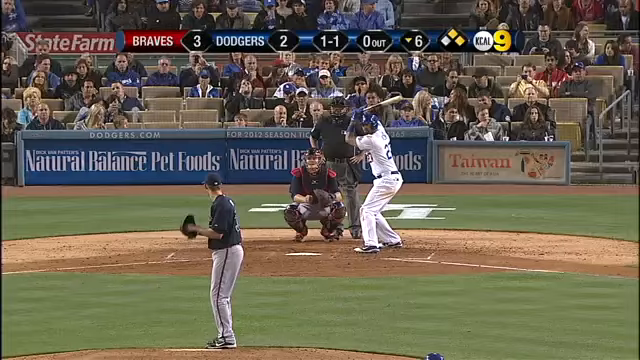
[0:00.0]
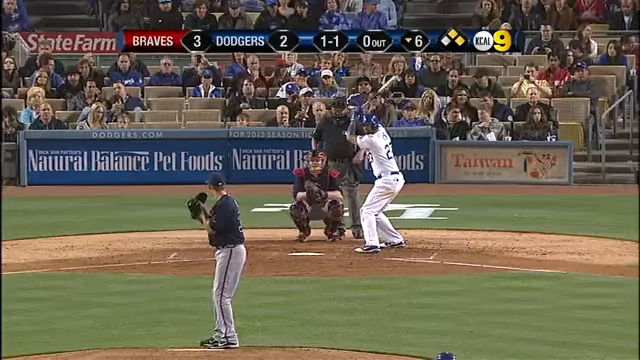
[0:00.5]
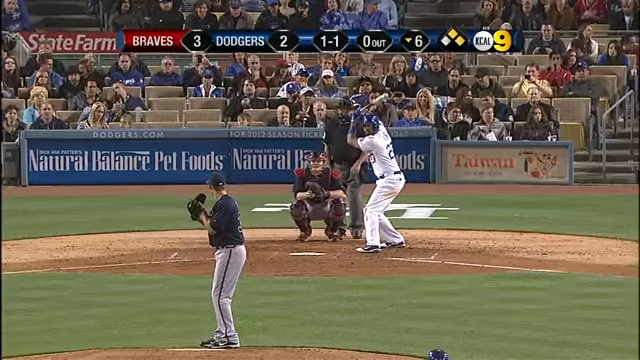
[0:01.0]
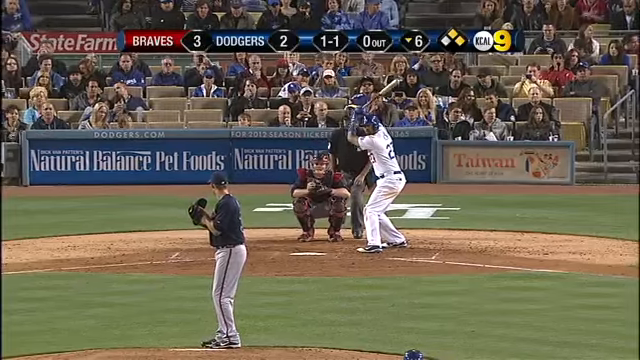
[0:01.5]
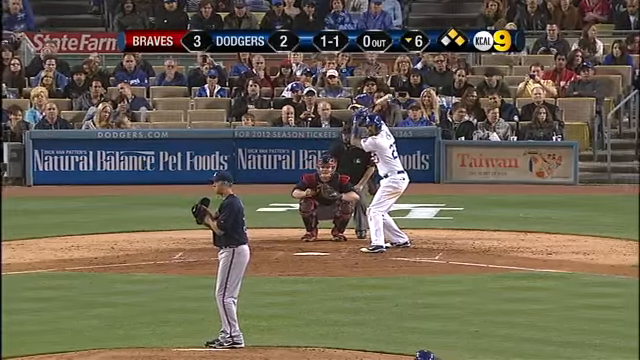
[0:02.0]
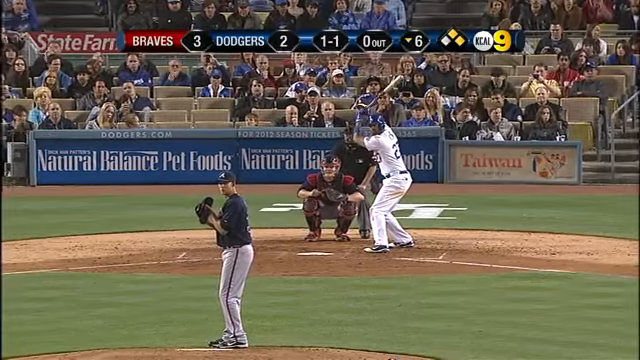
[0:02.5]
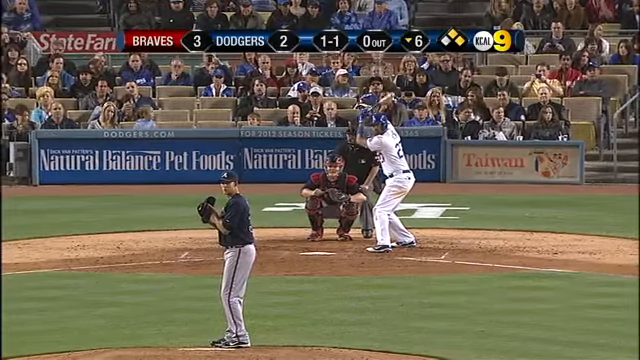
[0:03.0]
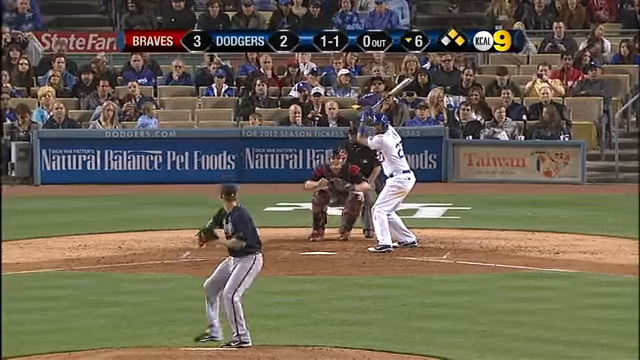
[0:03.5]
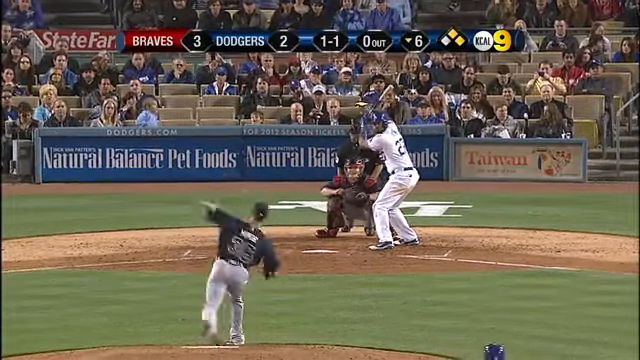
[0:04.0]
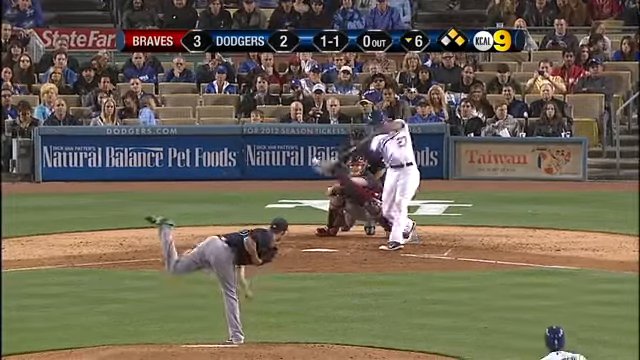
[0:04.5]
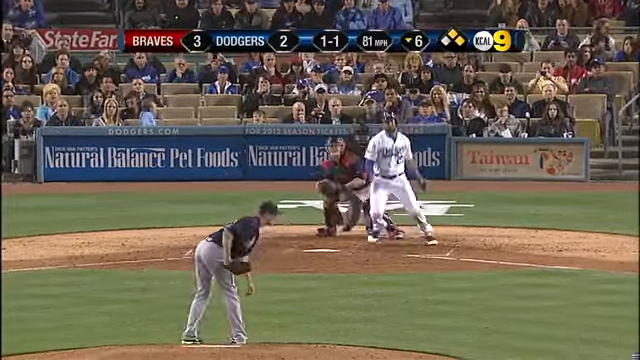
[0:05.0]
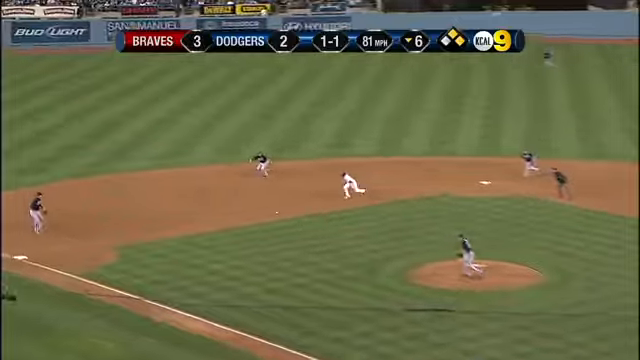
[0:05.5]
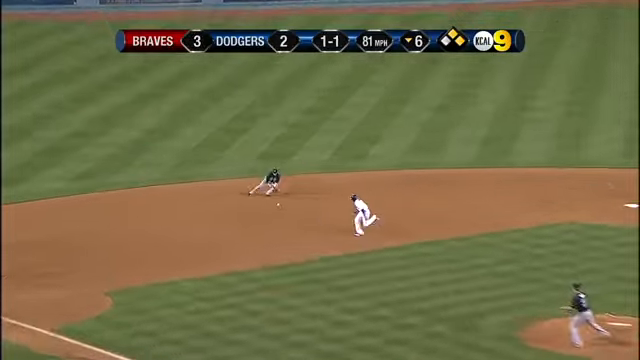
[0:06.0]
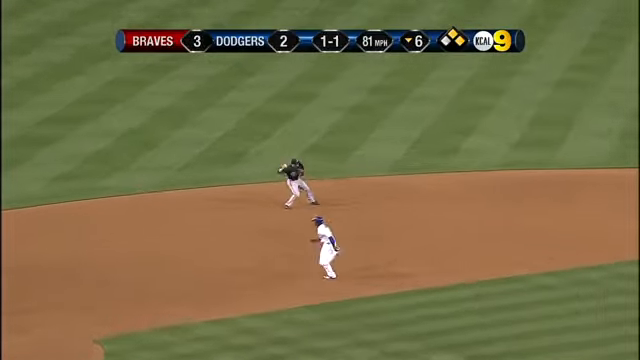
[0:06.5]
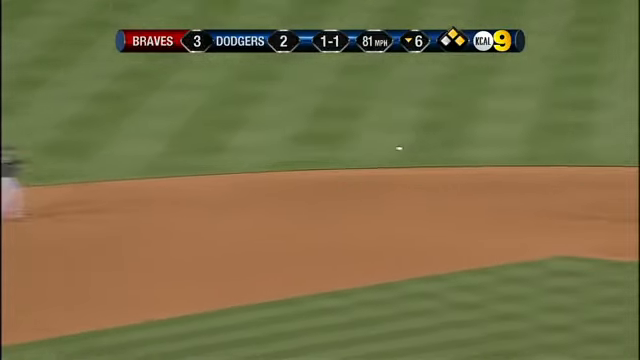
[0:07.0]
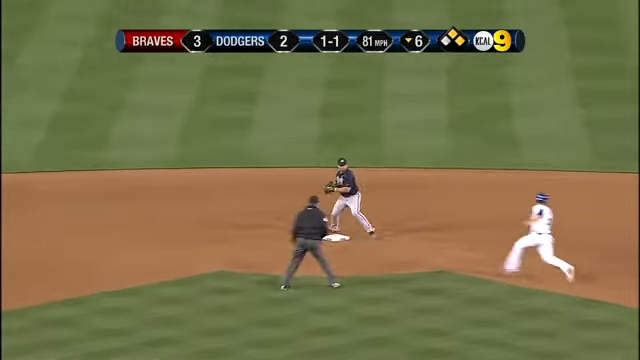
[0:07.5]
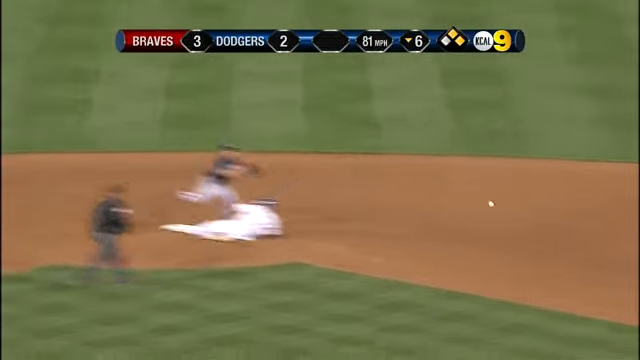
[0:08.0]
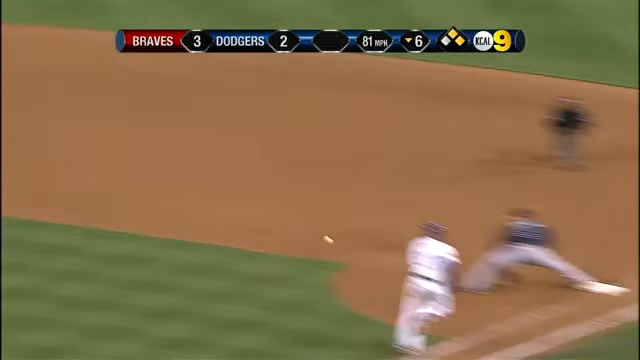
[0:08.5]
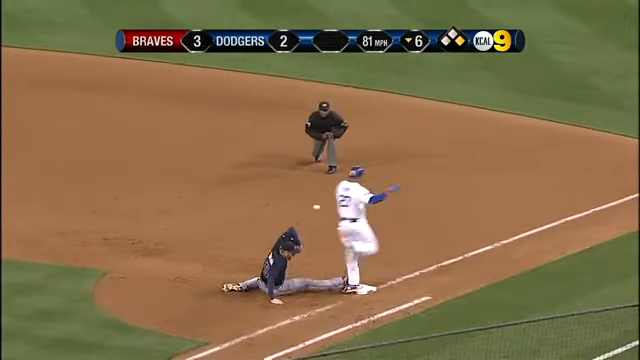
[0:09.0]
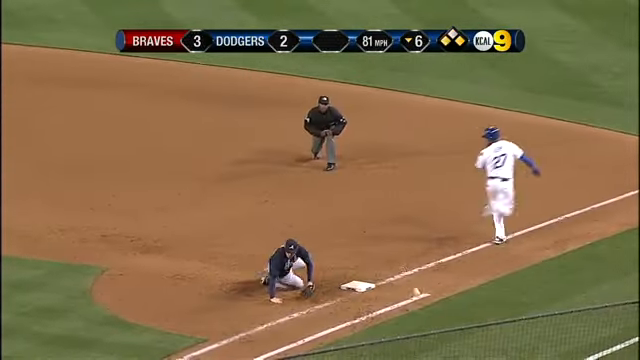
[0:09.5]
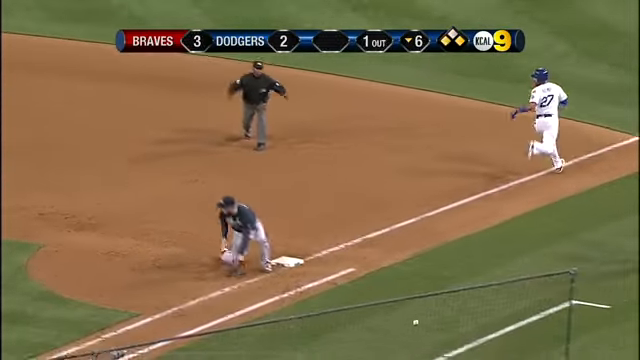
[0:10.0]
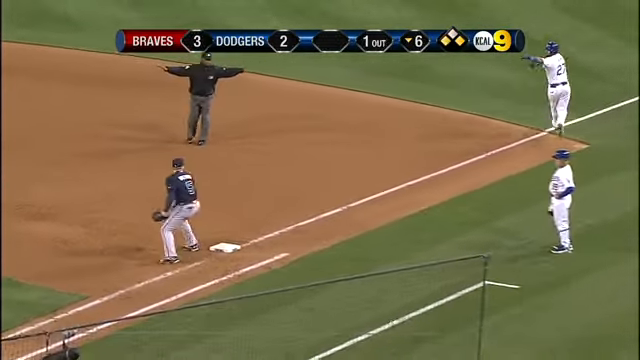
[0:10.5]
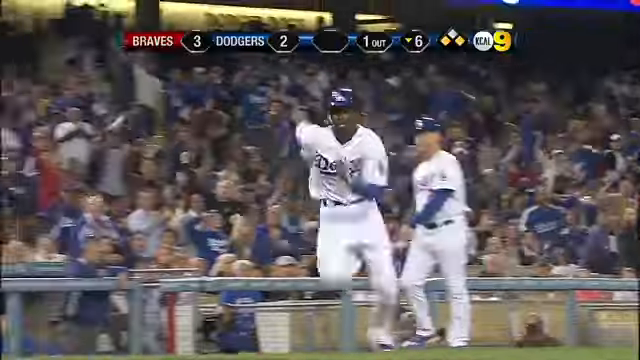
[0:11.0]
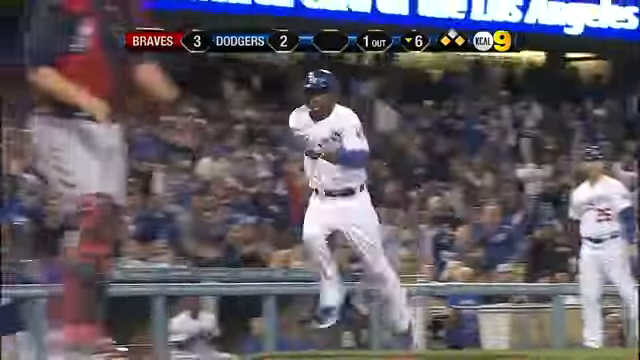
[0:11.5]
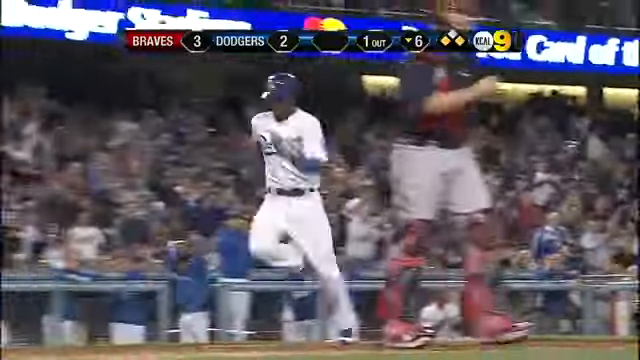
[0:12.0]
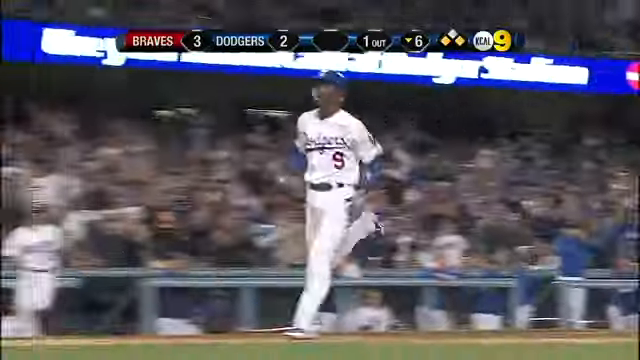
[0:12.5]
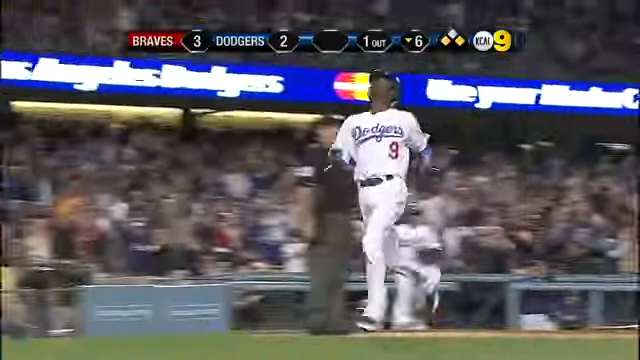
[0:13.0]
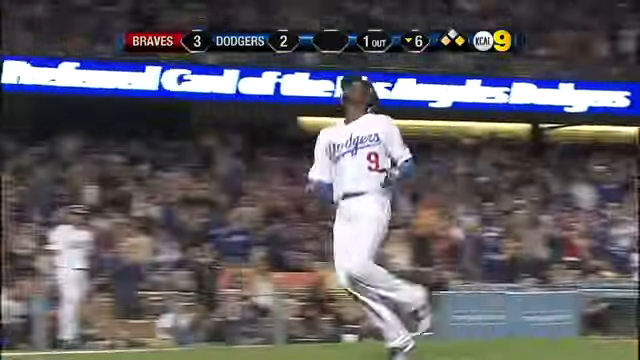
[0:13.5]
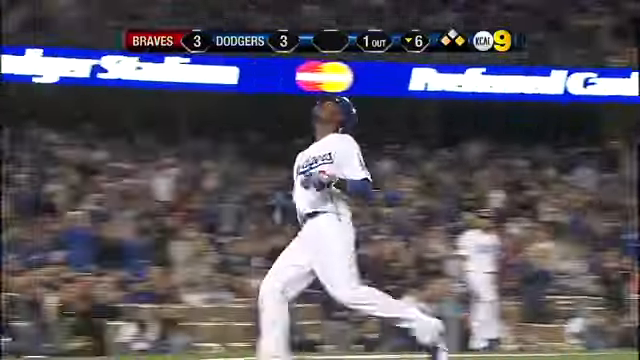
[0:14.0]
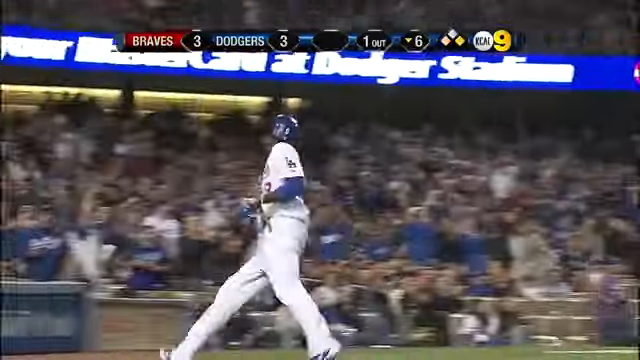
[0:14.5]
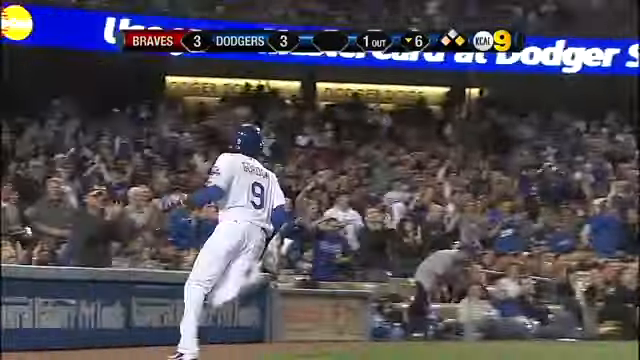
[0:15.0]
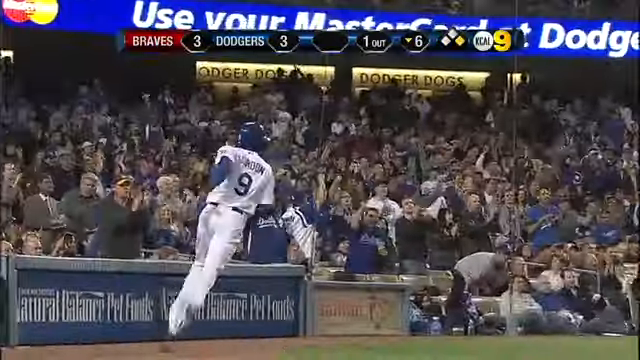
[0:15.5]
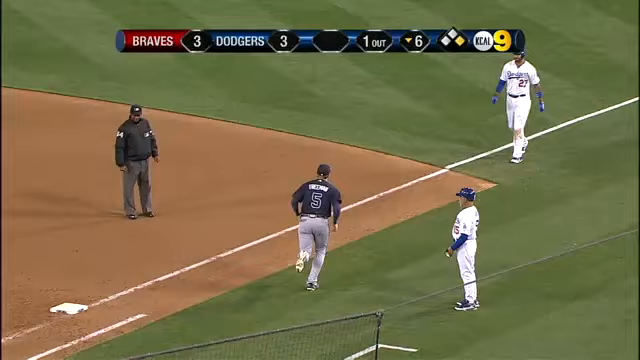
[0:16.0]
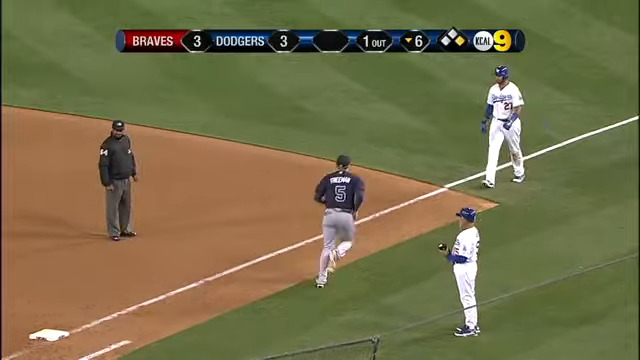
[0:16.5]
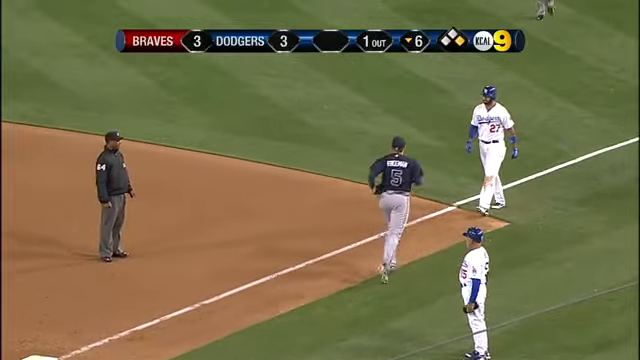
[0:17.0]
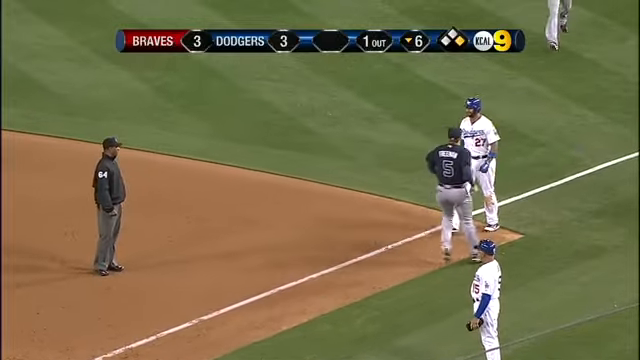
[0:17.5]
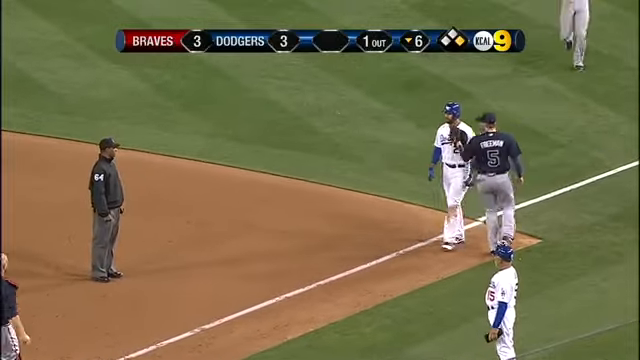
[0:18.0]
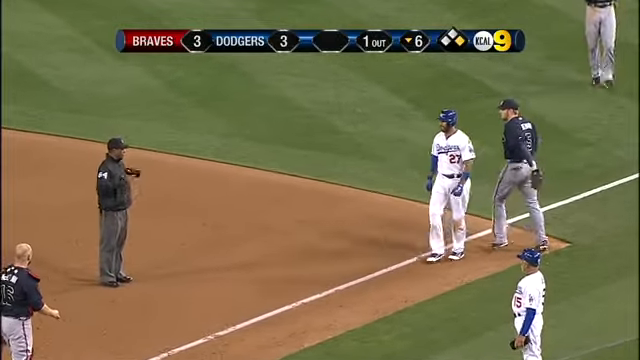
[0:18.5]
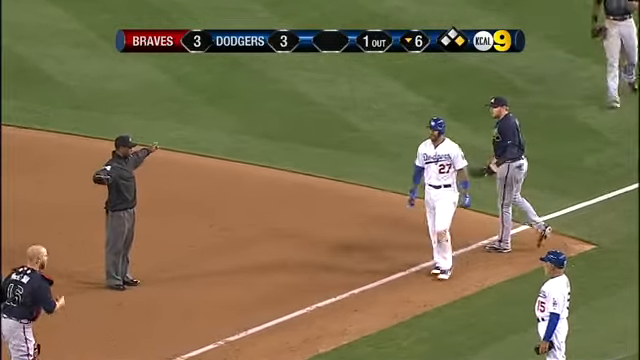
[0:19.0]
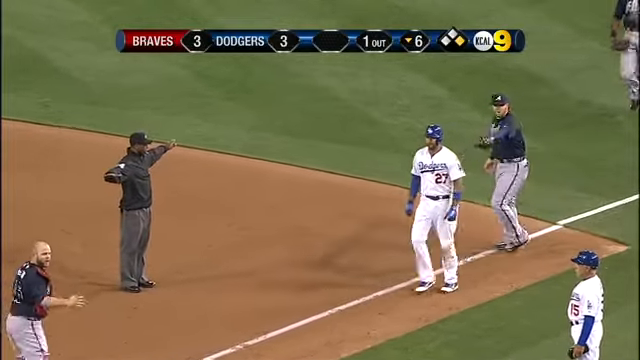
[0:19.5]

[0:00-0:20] A slightly wider-than-tall video appears to be a broadcast of a Braves versus Dodgers MLB game. A black score banner runs across the top. On the left, against a red background, "Braves" appears in white capital letters followed by the number 3; the banner then switches to blue with "Dodgers" and a 2. After that it shows "1-1", "0 outs" and "bottom of the six", along with three diamonds, the first white and the other two yellow, which seems to indicate runners on first and second. To the right, "KCAL" in black capital letters sits in a white circle, followed by a yellow number 9. Below, the view is from right behind the pitcher, who is just left of center in a black jersey and white pants with a black stripe down the side. A Black batter bats right, wearing a white uniform with dark blue lettering and a dark blue helmet. The catcher squats just to the left of him, right in the center, with the umpire behind him.